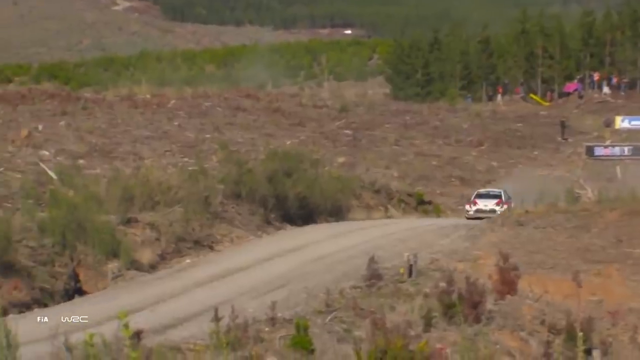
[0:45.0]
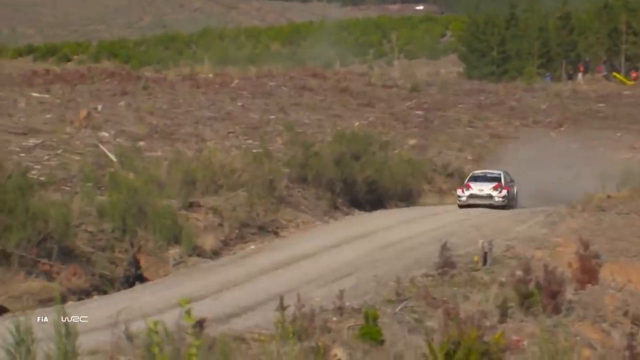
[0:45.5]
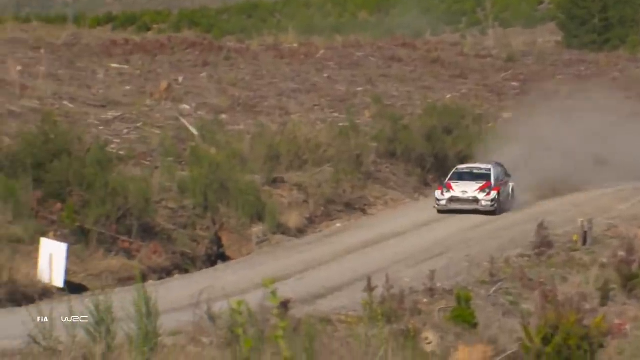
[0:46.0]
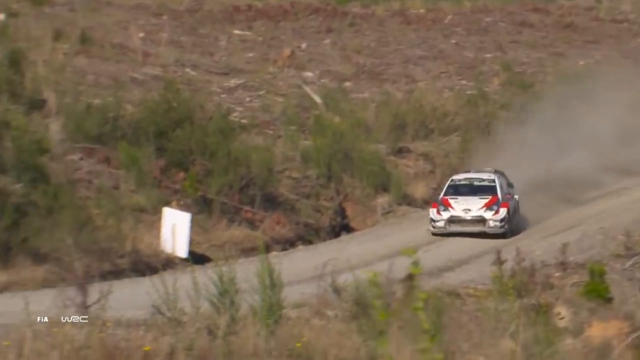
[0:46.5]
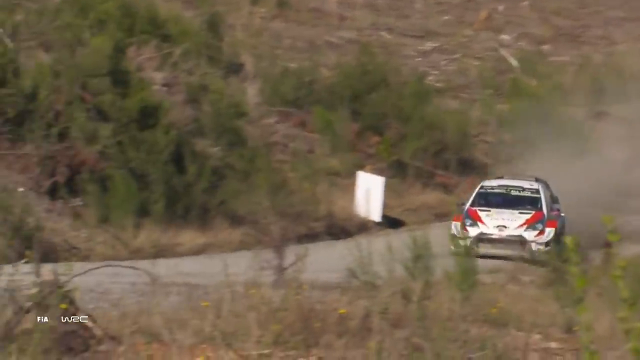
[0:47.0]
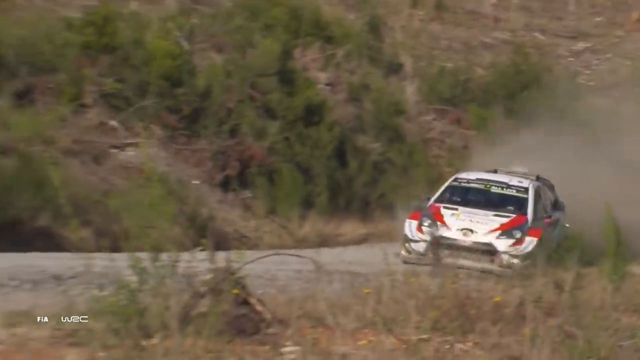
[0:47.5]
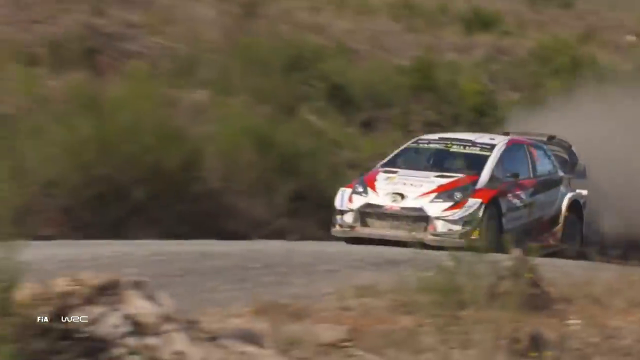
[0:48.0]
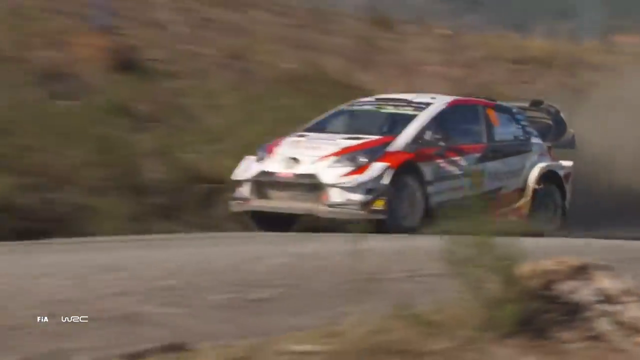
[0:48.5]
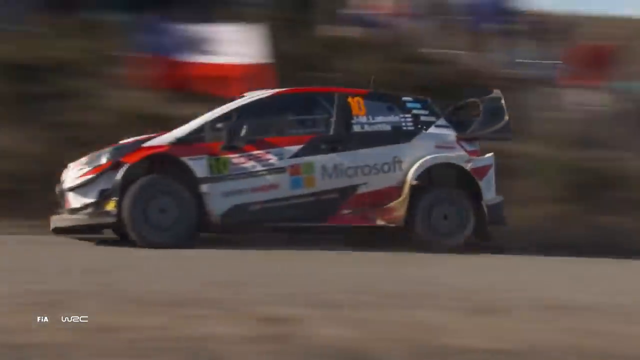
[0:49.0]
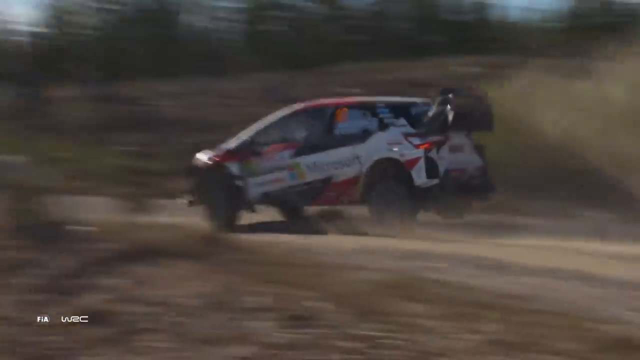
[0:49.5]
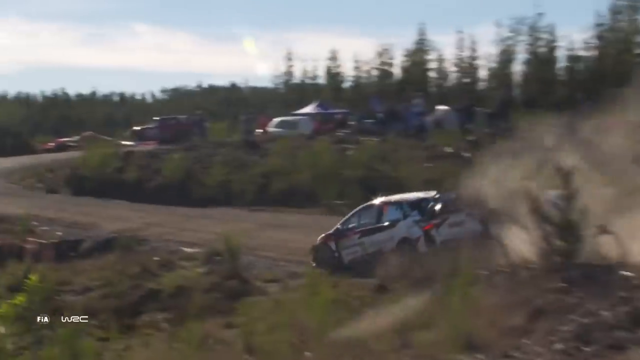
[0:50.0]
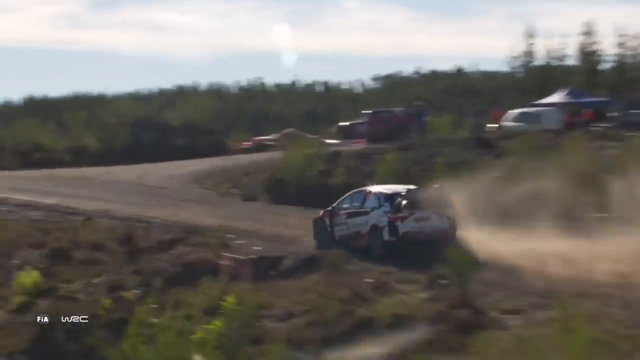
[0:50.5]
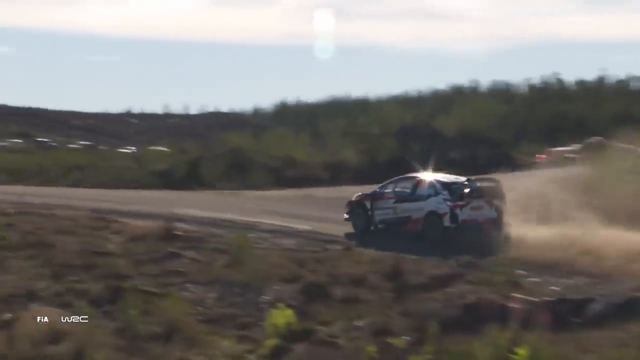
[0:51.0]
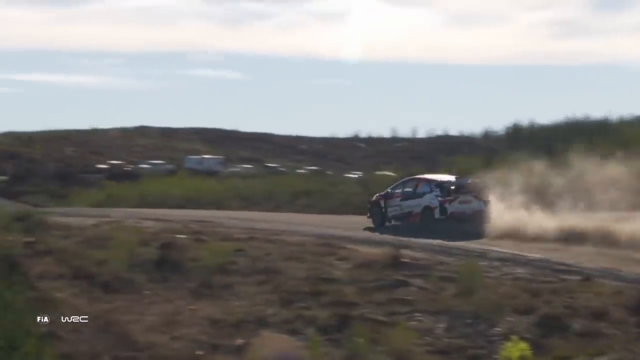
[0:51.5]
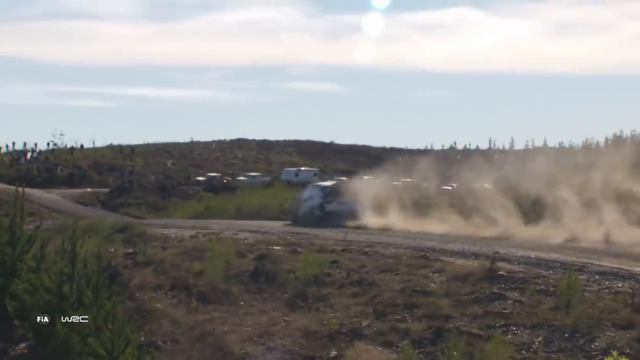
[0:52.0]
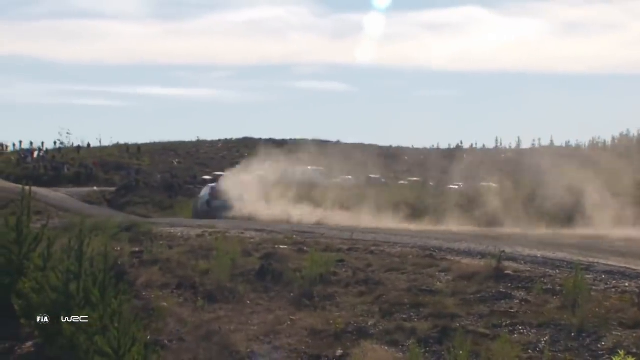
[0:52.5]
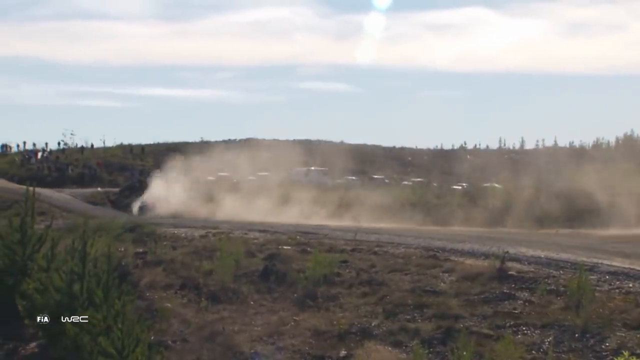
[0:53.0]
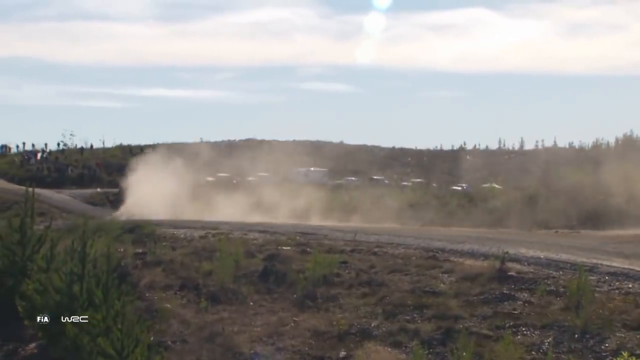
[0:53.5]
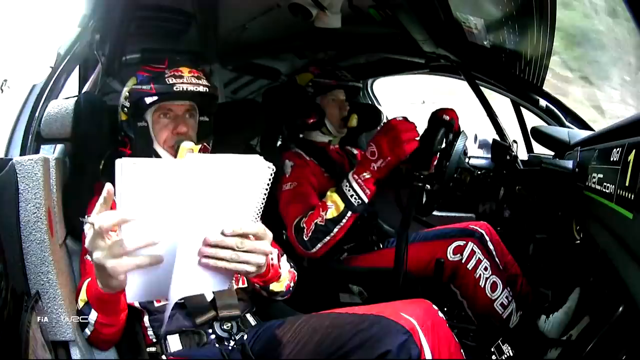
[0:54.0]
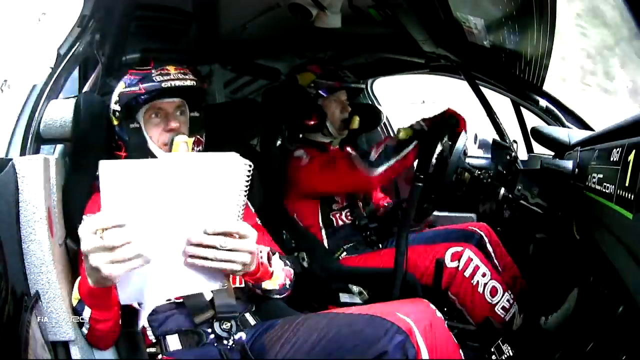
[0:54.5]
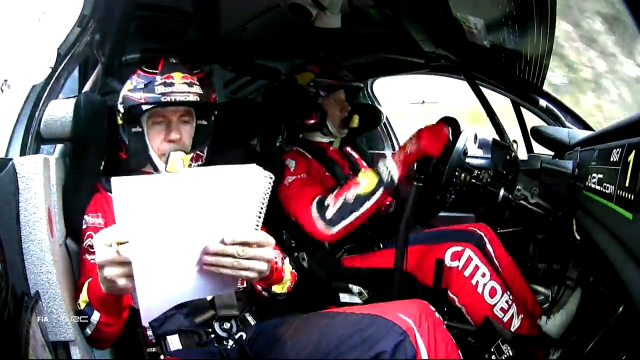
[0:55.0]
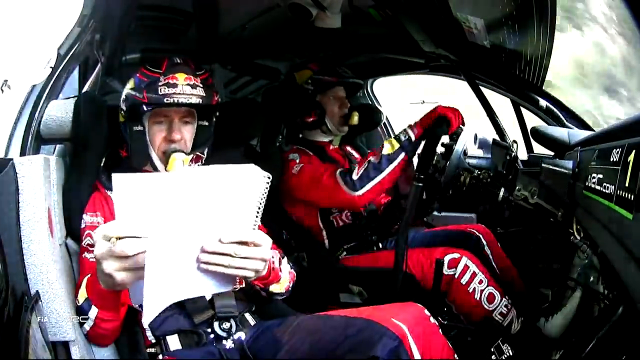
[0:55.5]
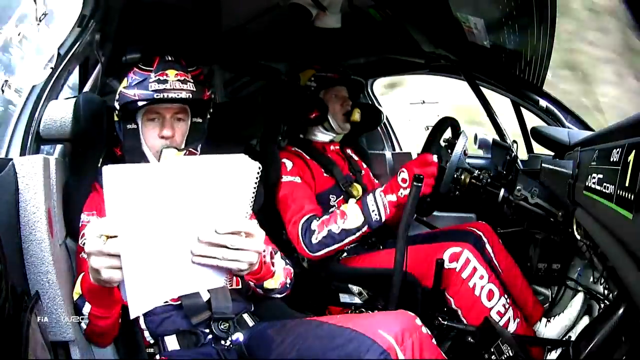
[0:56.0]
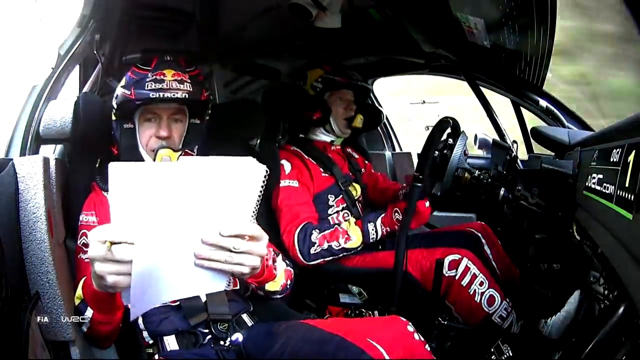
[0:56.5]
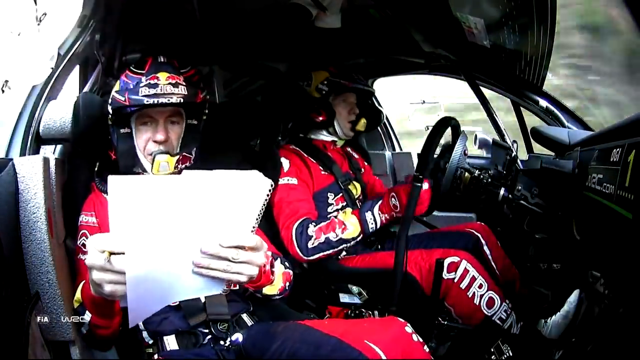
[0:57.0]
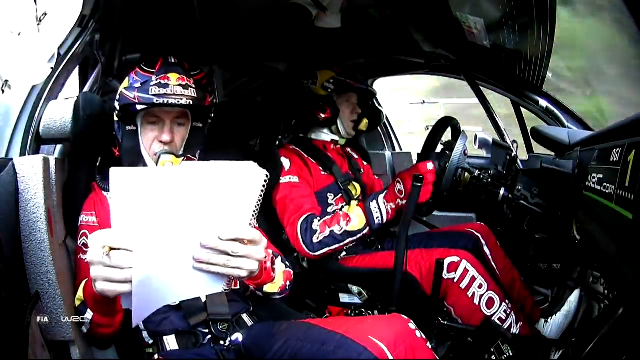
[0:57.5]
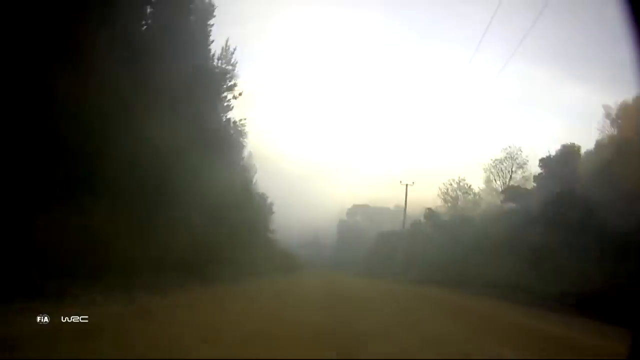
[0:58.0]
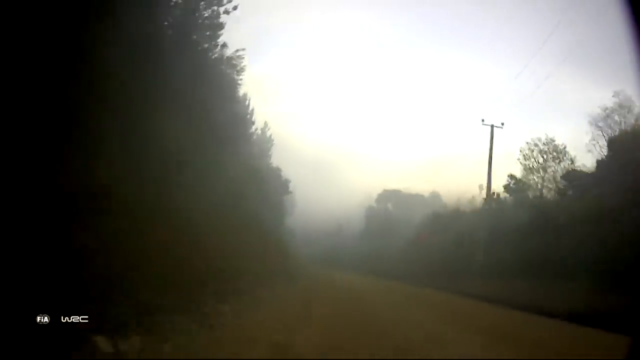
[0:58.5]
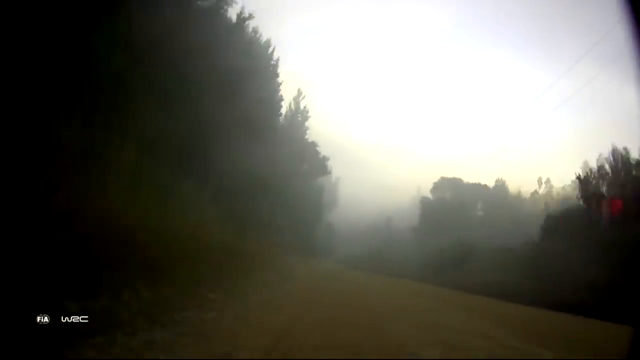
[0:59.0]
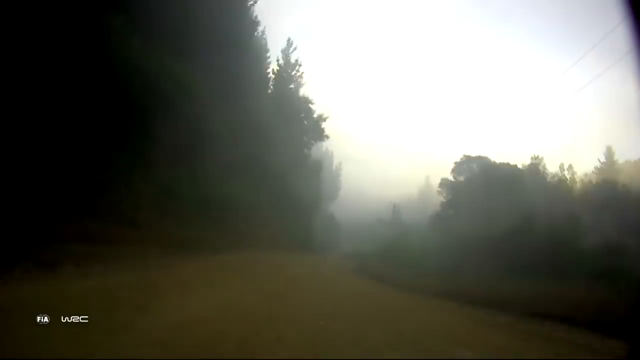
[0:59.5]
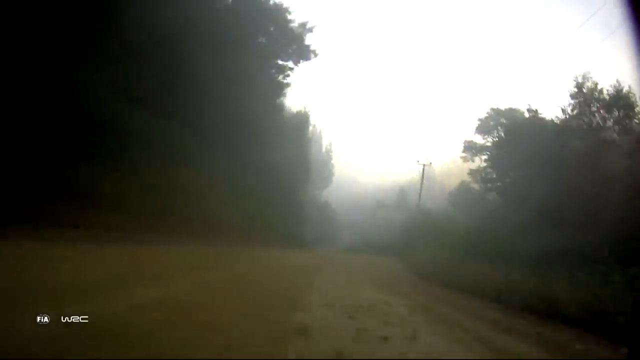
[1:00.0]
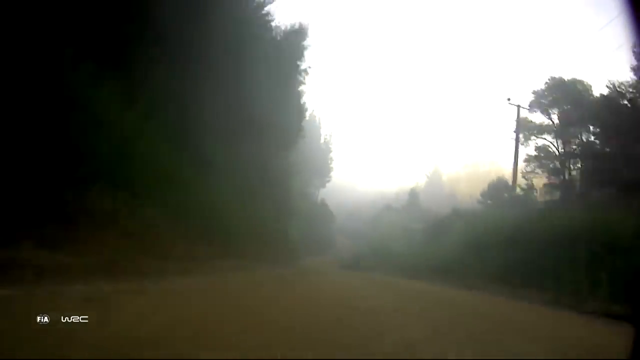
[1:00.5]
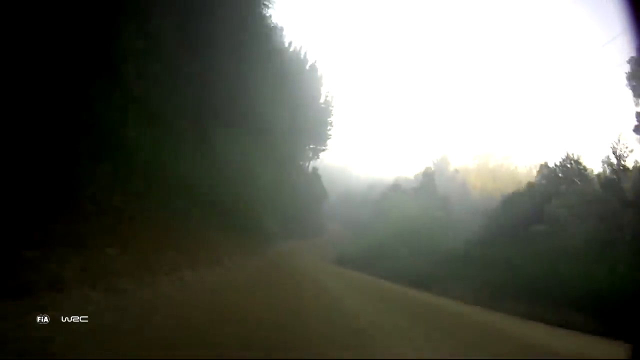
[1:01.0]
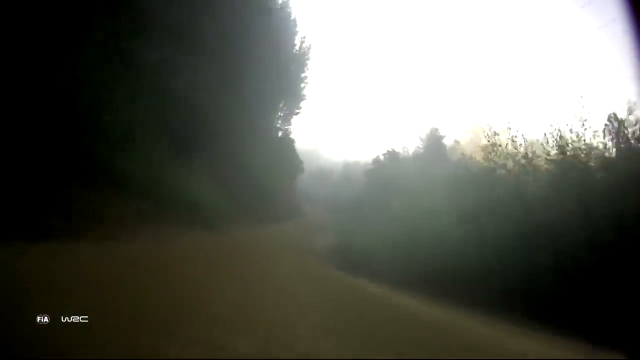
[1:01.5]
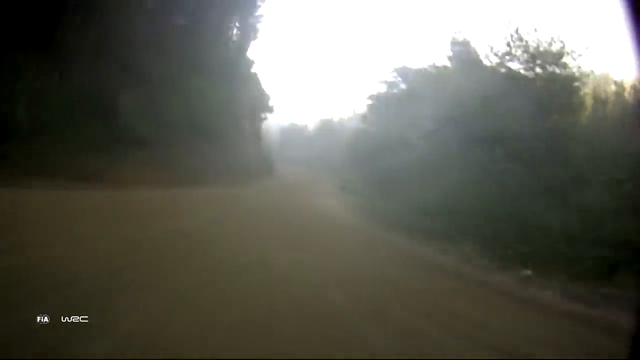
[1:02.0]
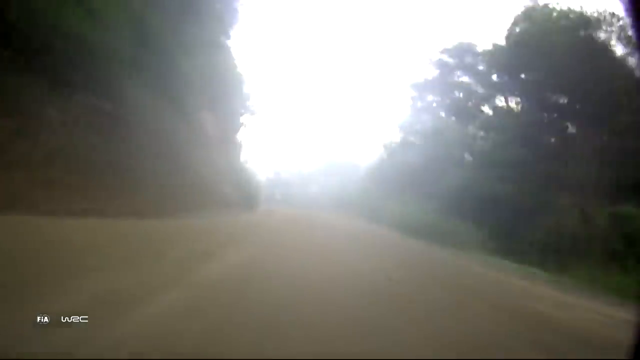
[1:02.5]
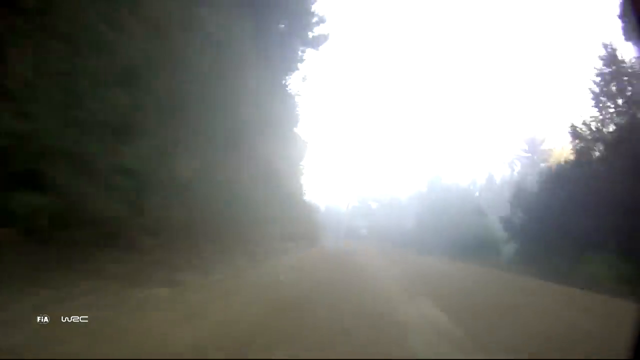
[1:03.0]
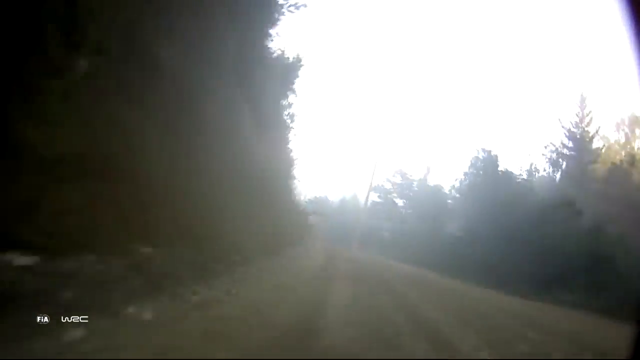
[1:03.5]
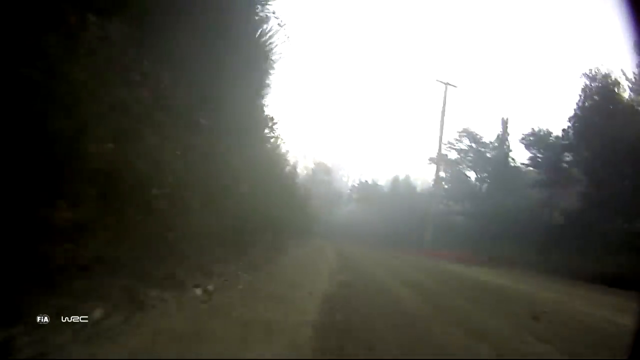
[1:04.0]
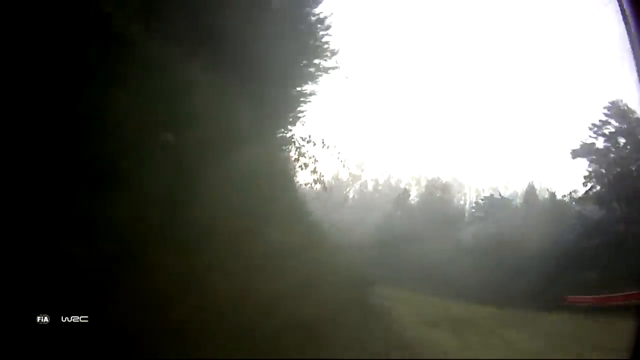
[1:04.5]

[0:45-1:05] At an outdoor motor race, a car goes very fast around curves with a lot of smoke and dust coming out the back. The video cuts to the inside of the vehicle, showing the driver and a passenger; the passenger looks at a notebook or some papers to take notes on. Dust and dirt fly up behind the speeding vehicle. They have microphones on their helmets, possibly to communicate with each other or with their pit crew. The race runs along a winding, curvy dirt road, at times with forest on both sides and at times with open fields on both sides. The occupants are dressed in red, with protective gear on their tops and gloves, and the man writing wears gloves while trying to write with a pen.